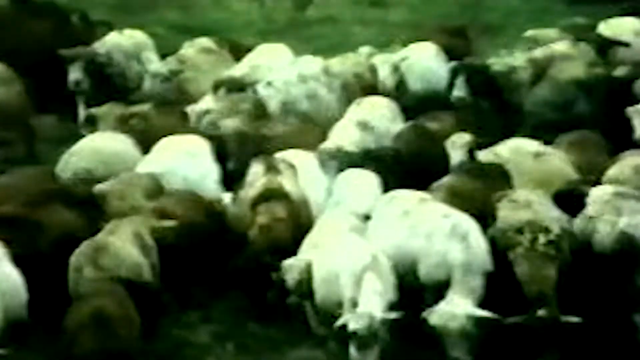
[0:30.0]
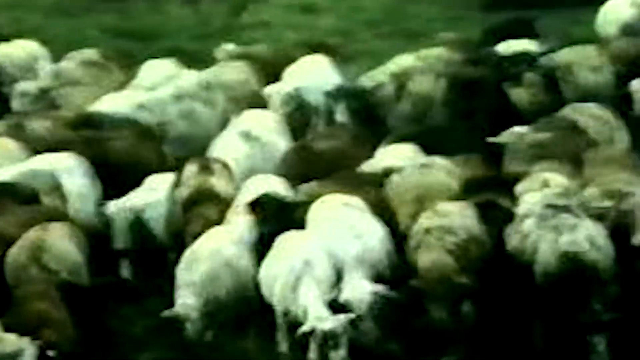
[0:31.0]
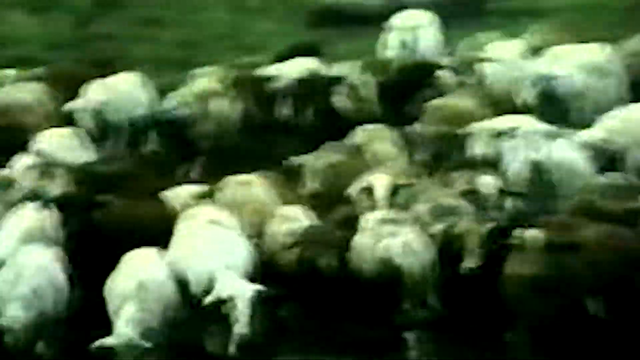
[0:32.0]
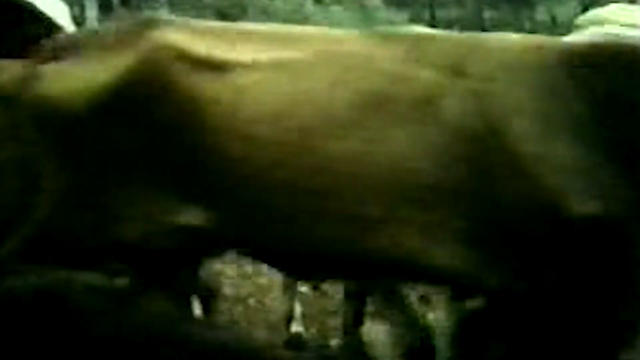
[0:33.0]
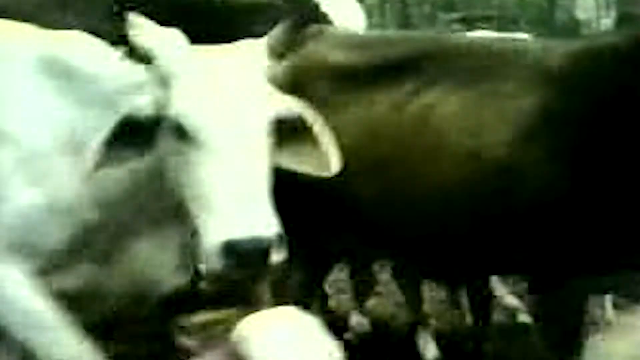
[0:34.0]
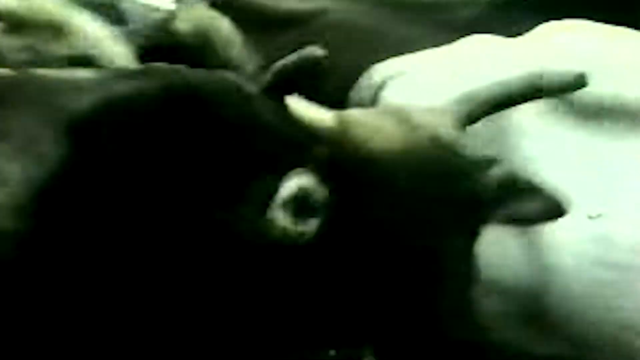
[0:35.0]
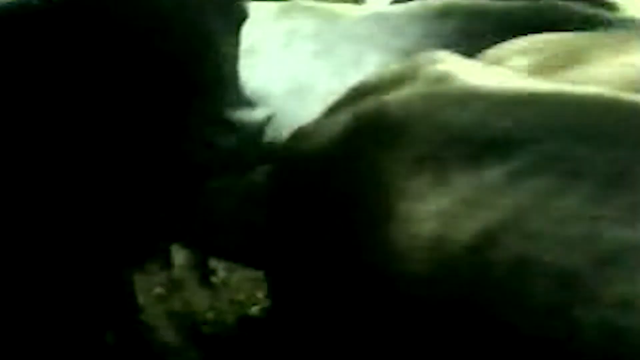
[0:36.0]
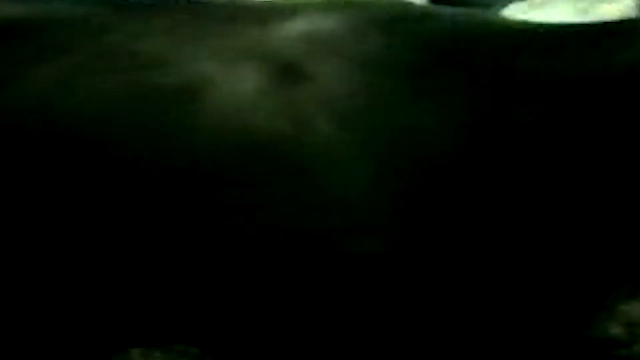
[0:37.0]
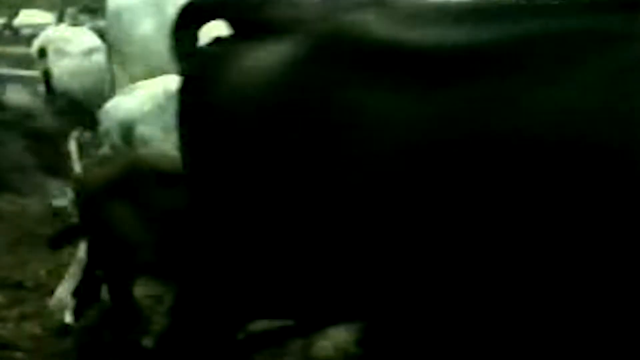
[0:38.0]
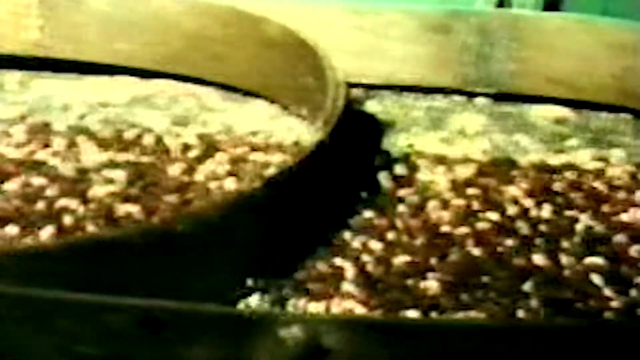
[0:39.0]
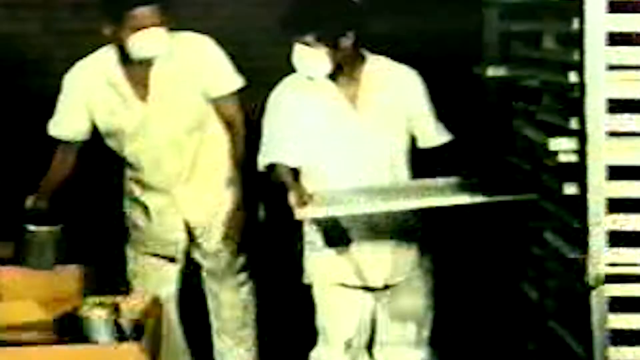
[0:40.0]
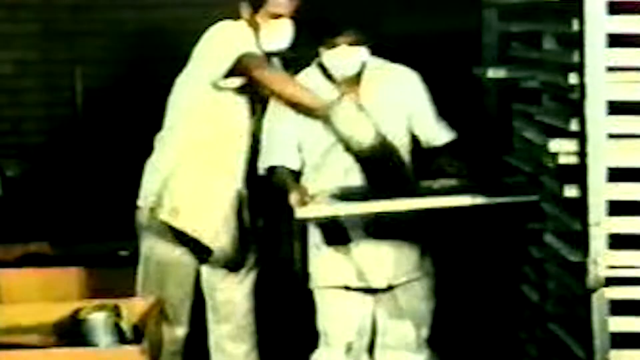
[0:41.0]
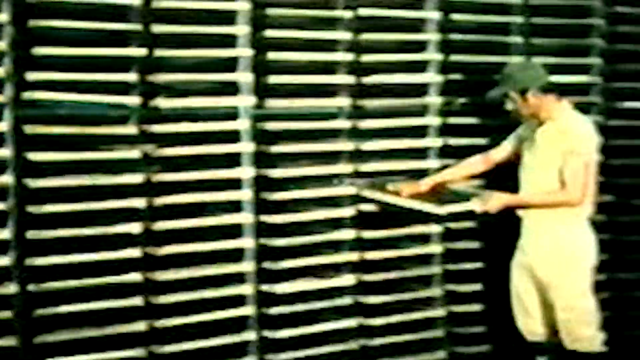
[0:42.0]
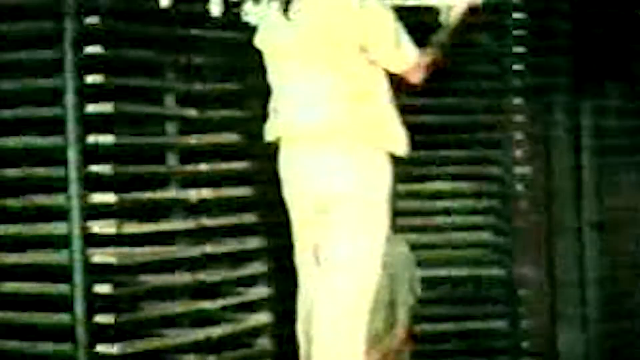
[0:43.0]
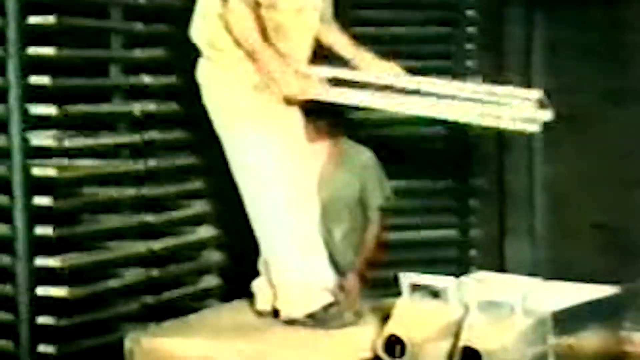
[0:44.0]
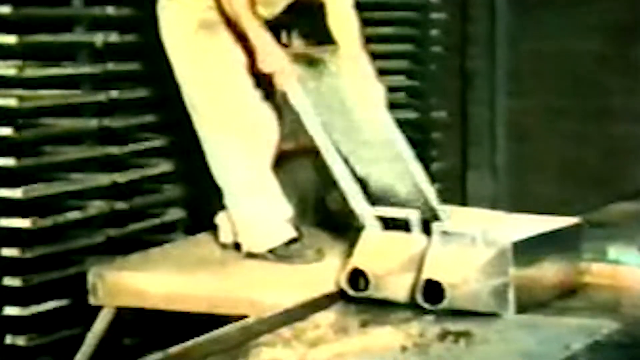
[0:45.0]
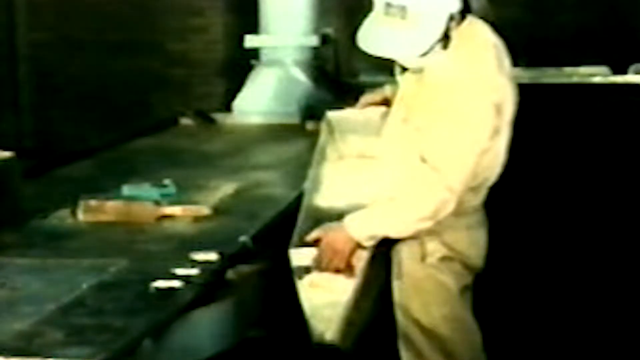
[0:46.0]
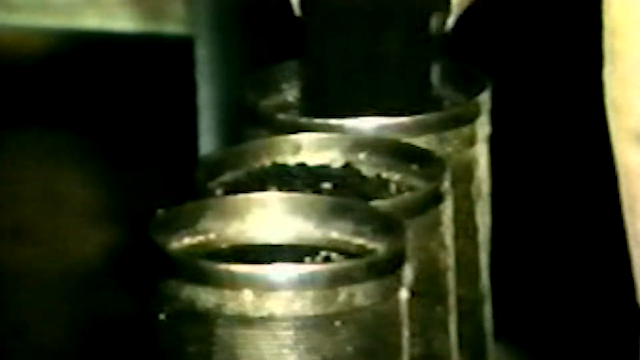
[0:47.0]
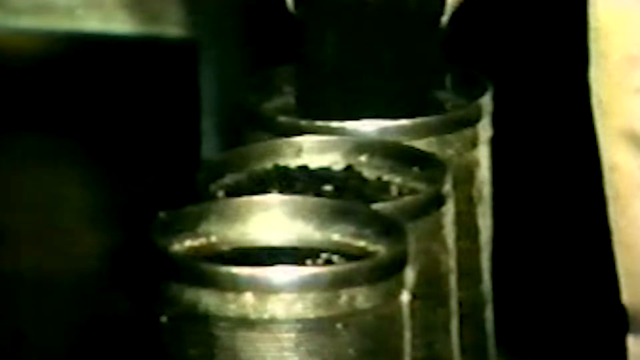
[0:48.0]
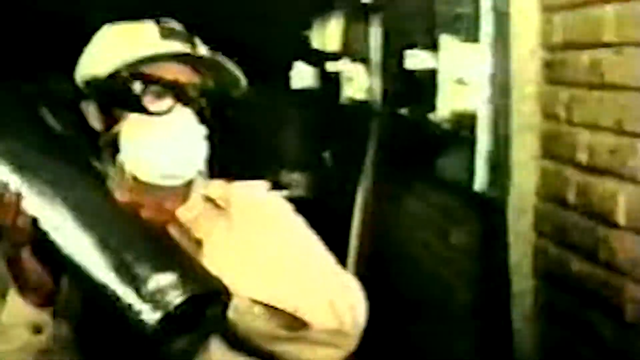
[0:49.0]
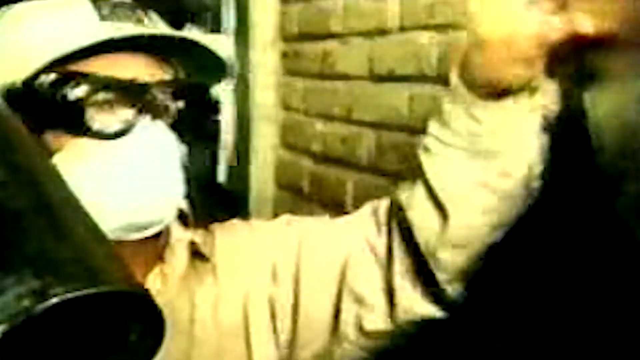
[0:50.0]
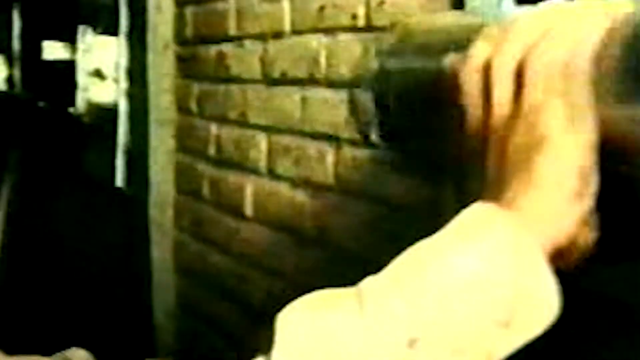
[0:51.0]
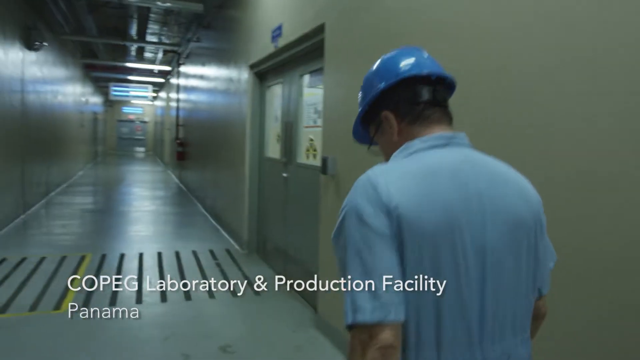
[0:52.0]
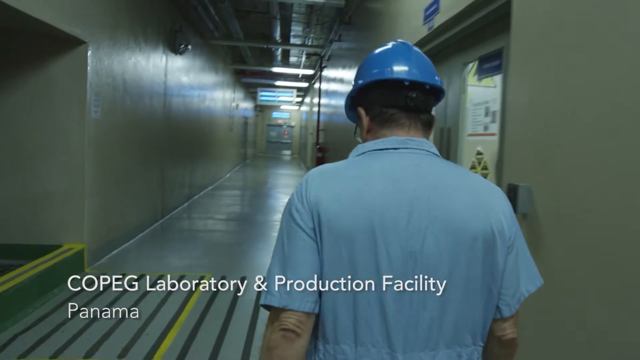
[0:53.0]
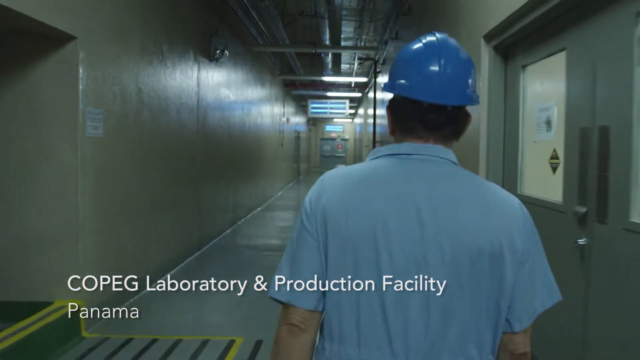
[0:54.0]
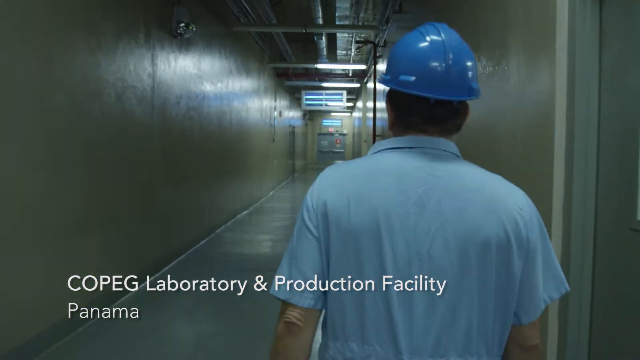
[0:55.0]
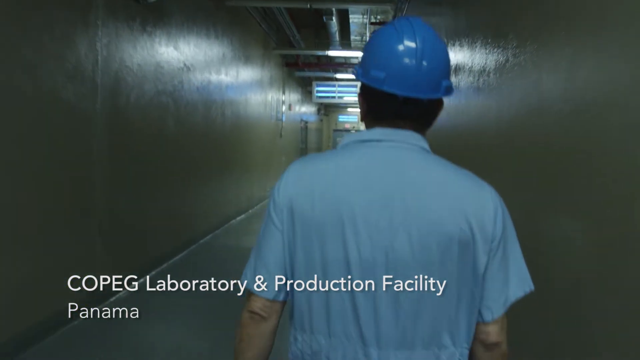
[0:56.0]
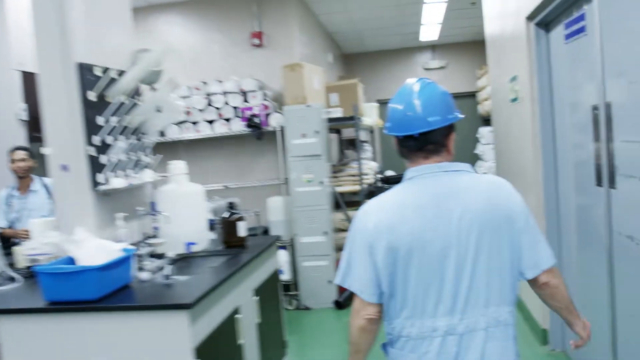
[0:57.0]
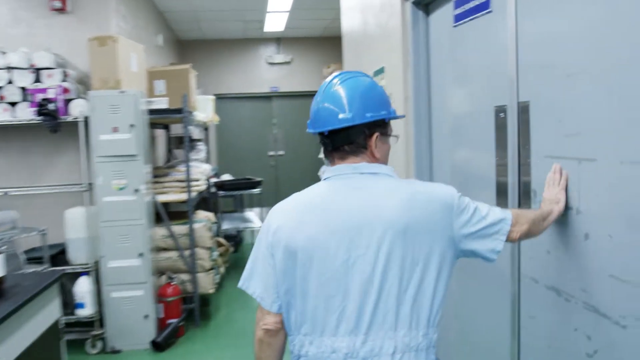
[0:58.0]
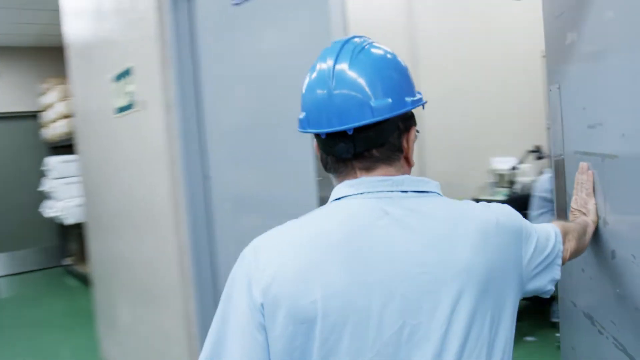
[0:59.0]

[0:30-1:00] The cows are shown huddled in the pasture and running forward toward the camera. The view then zooms out and shows them walking slowly by, grouped into herds, moving from the left to the right side of the screen. The scene changes to a factory-type setting with two workers in a room. Both appear to be men; they wear all-white uniforms and white masks over their nose and mouth. They pull trays out and dump things into big canisters, then put these canisters into a spot on the wall. Next, a man in a blue shirt and a blue hard hat walks down a big empty hallway. After several steps, the same man is shown in a warehouse pushing open a large gray door and walking into another room.